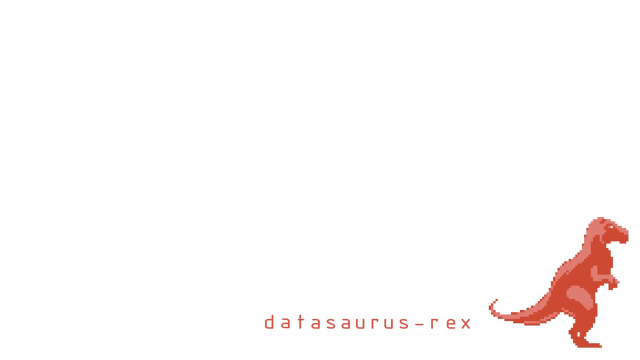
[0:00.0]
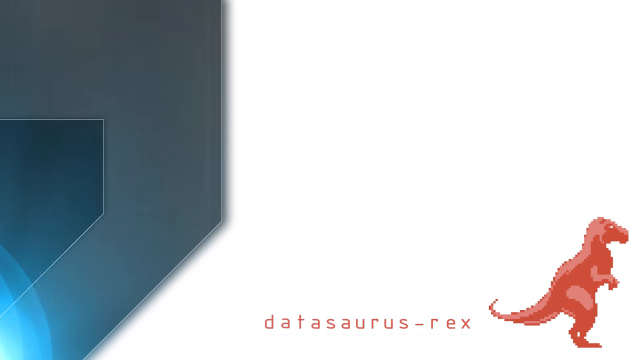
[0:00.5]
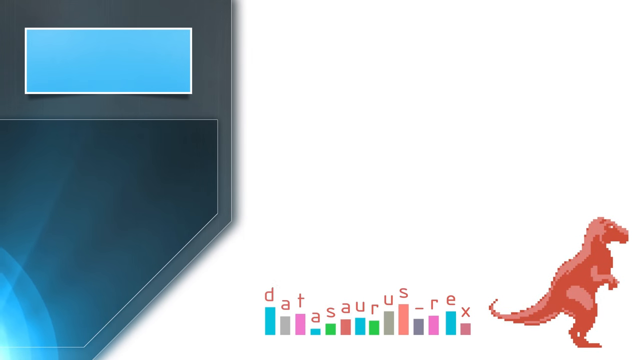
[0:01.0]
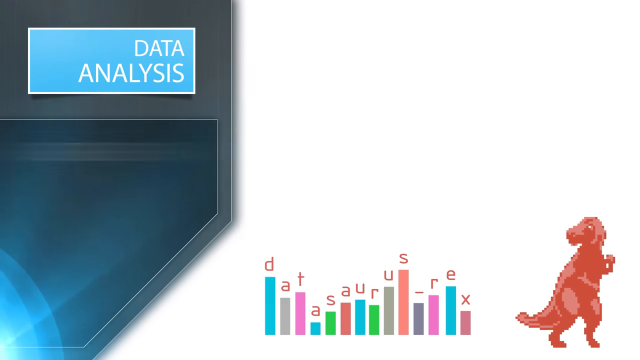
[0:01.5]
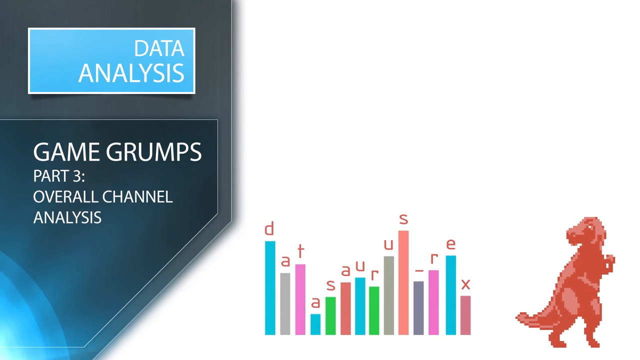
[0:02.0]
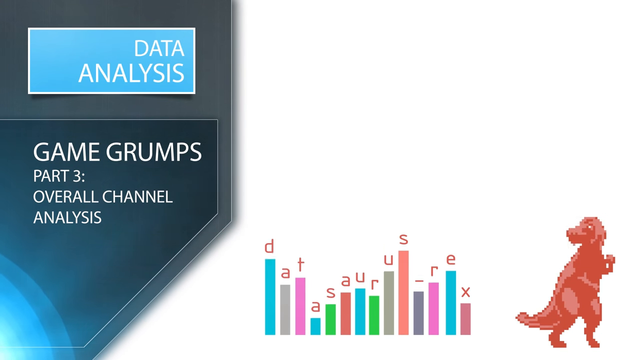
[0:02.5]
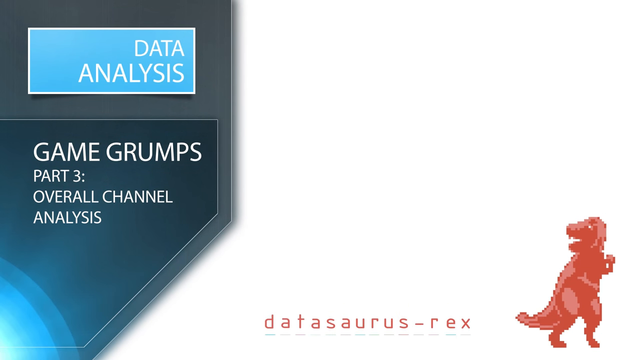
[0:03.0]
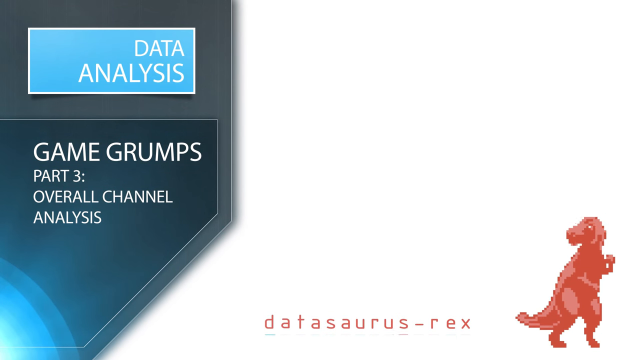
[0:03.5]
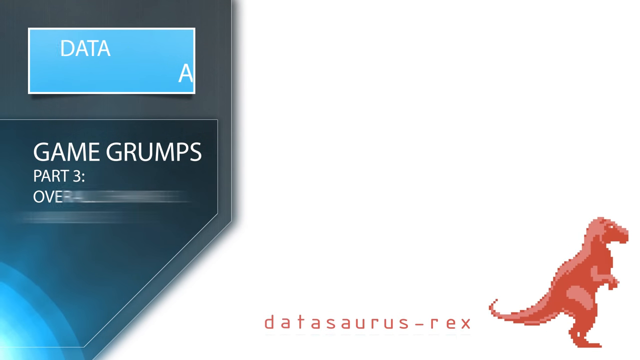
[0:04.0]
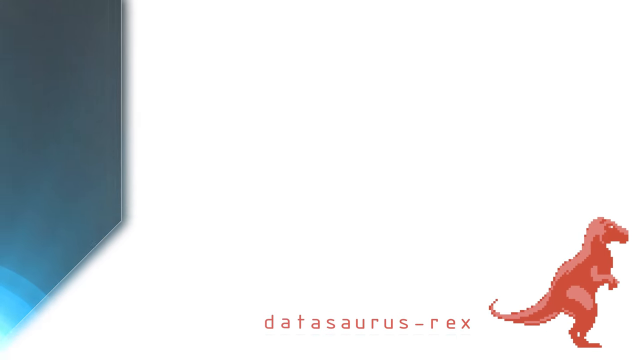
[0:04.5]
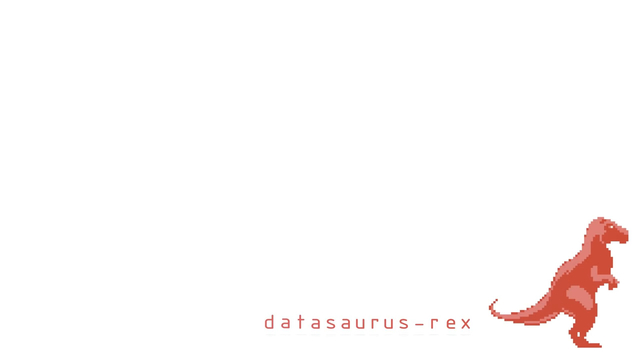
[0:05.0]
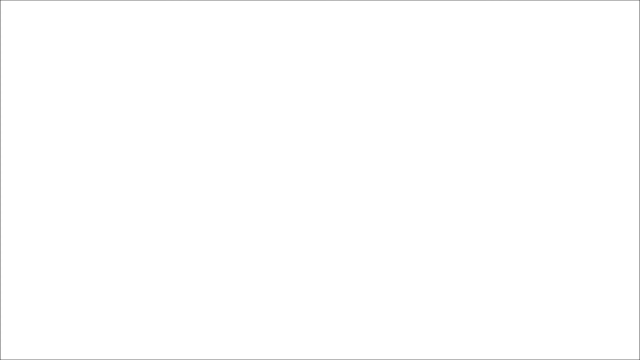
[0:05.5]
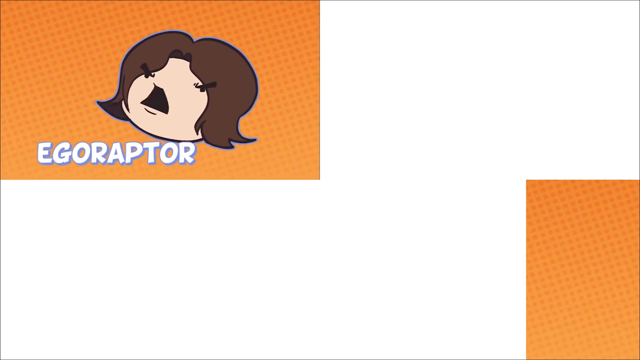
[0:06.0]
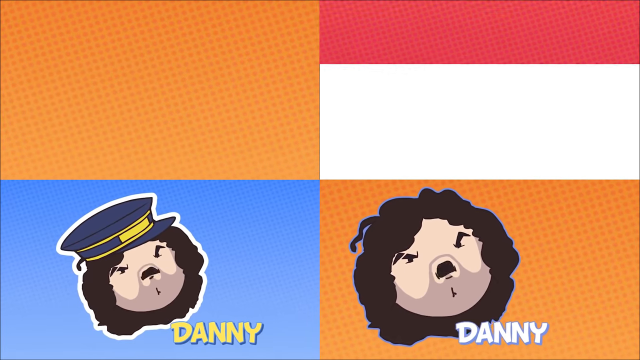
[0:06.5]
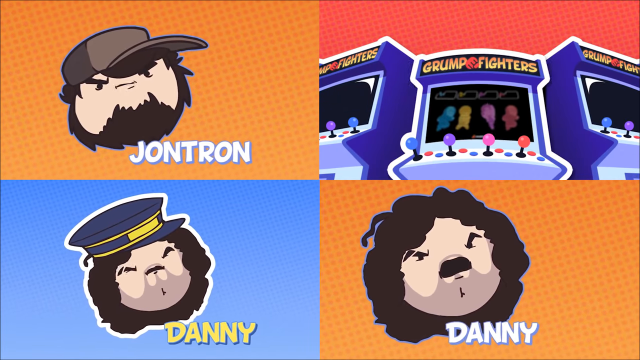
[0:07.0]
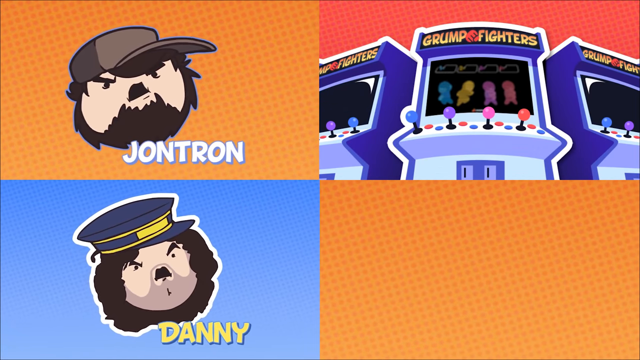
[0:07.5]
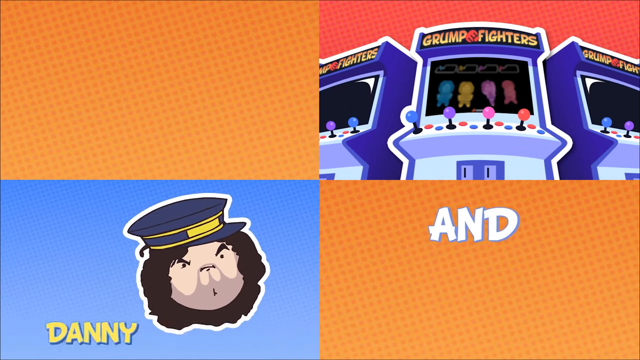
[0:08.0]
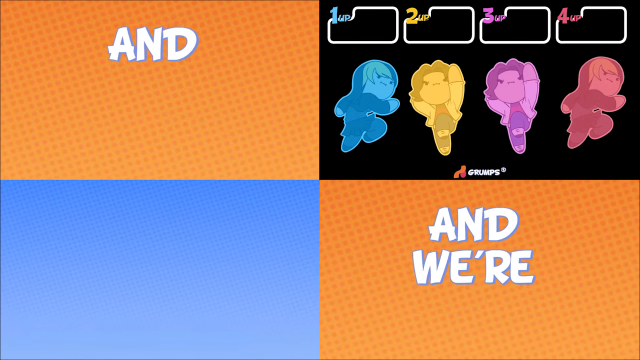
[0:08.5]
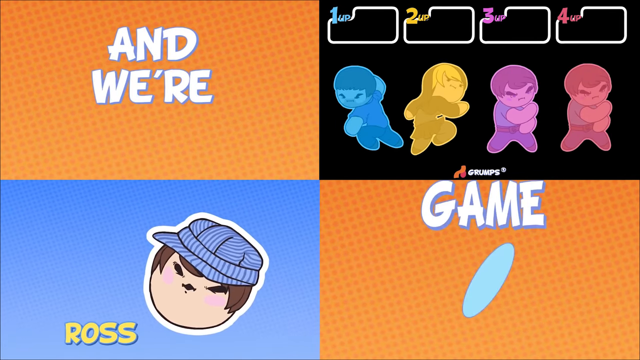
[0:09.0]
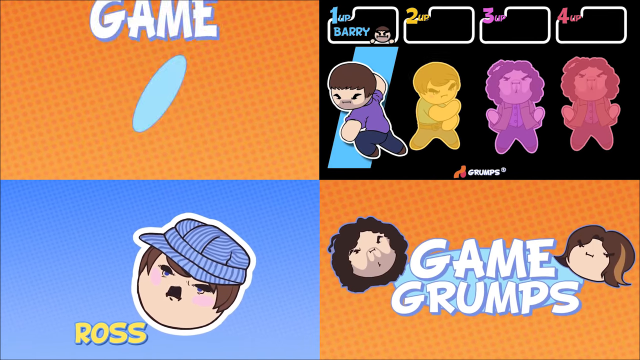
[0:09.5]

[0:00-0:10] The video opens on what appears to be a YouTube video of Game Grumps Part 3 overall channel analysts. A wavy blue rectangular text box on the far top left reads "Data Analyst." A T-Rex in red is on the far right, and the center shows "Datasaurus Rex" with bars colored pink, purple, green, and brown. The video cuts to Danny and Jontron, animated with cartoon character heads, along with arcade-like games labeled "Grump Fighters" that show four individuals with four Joy-Cons, and white text reads "and we're the Game Grumps."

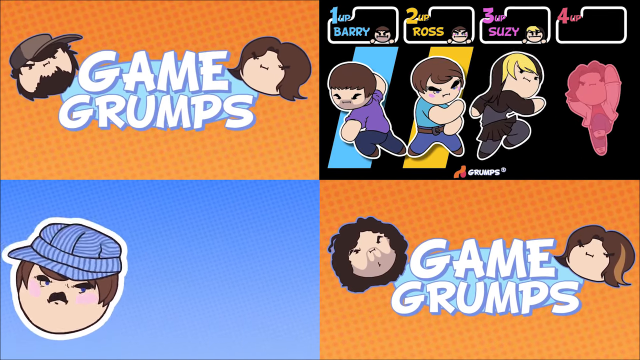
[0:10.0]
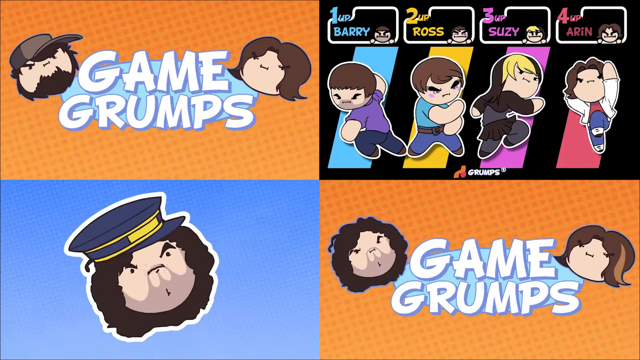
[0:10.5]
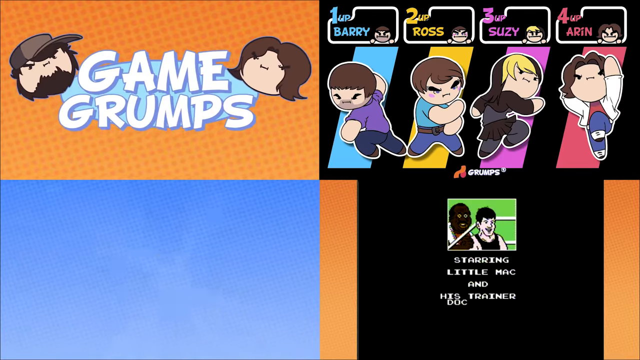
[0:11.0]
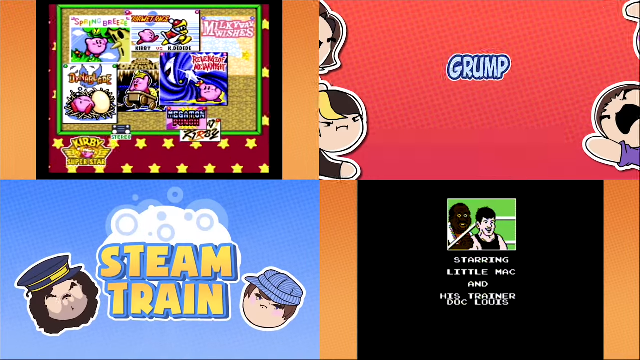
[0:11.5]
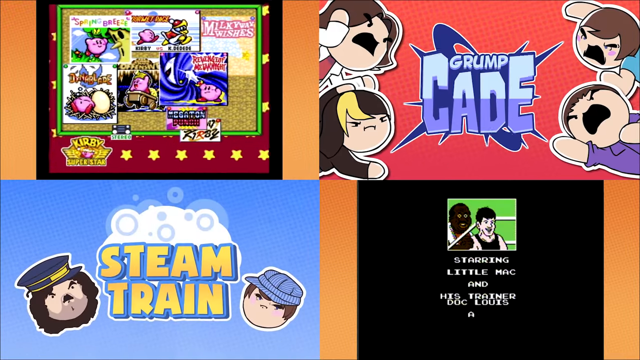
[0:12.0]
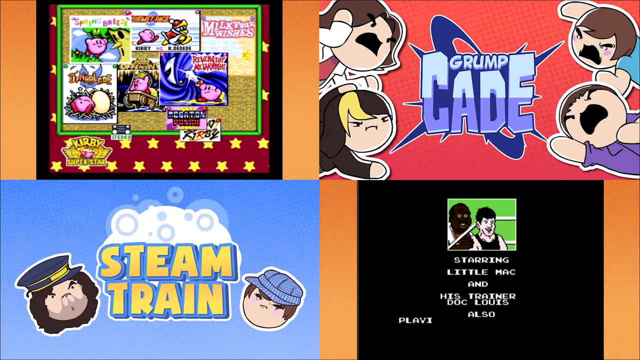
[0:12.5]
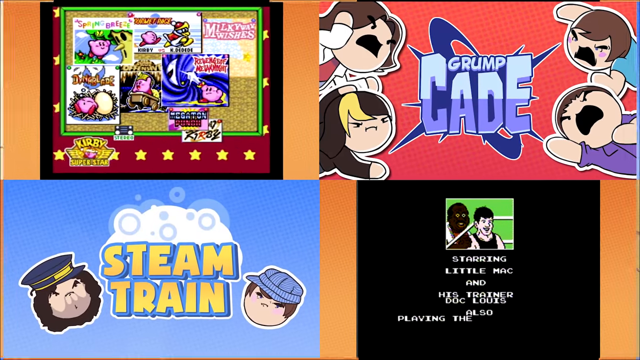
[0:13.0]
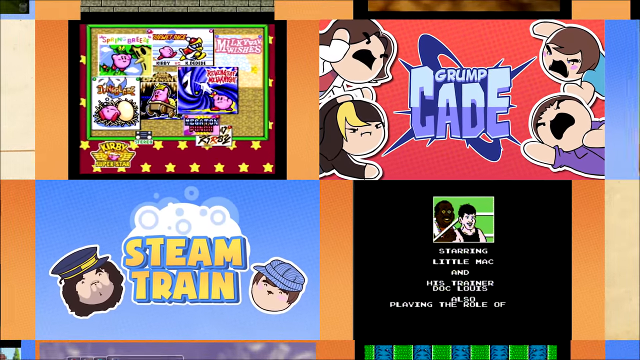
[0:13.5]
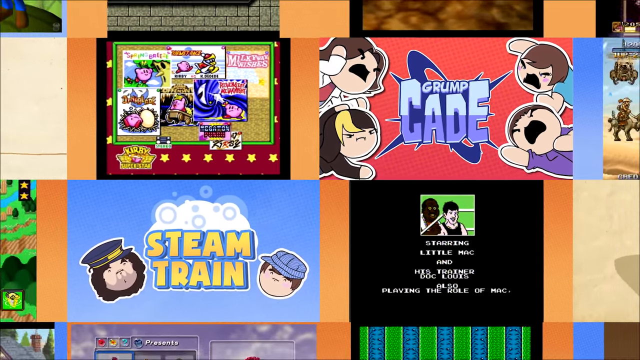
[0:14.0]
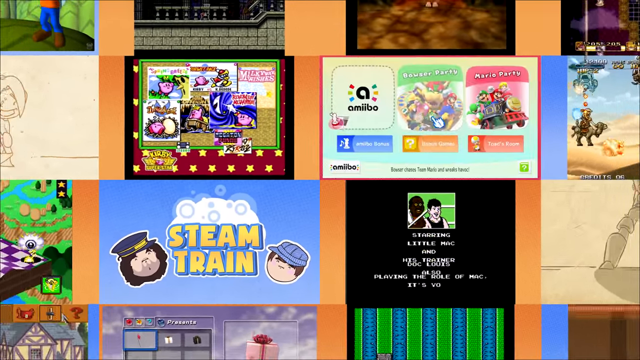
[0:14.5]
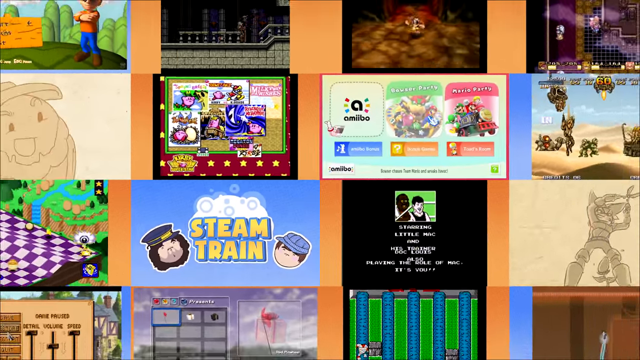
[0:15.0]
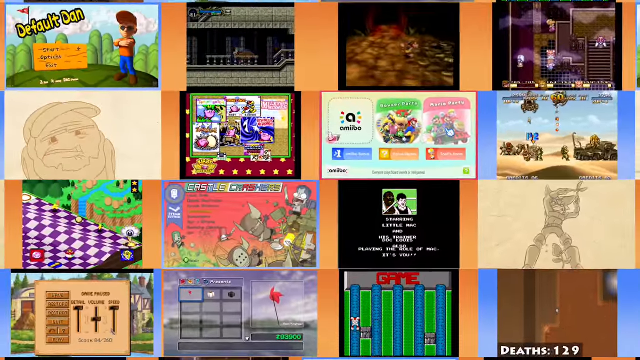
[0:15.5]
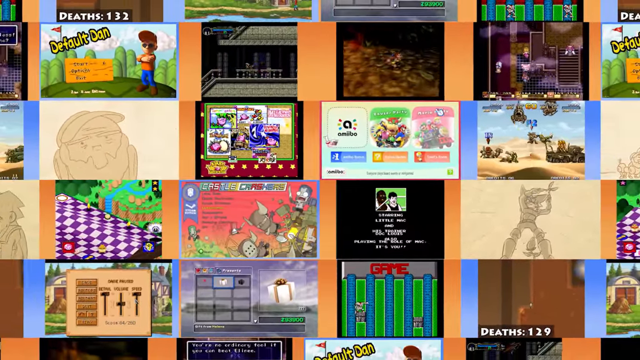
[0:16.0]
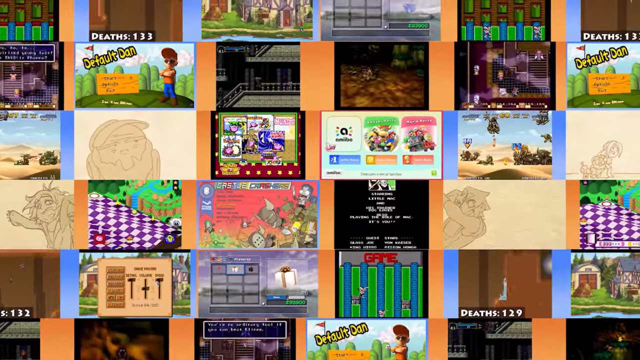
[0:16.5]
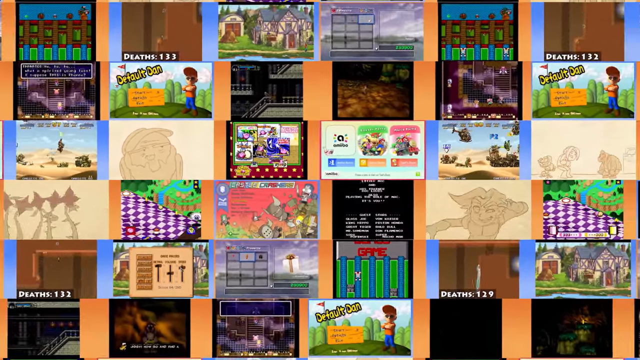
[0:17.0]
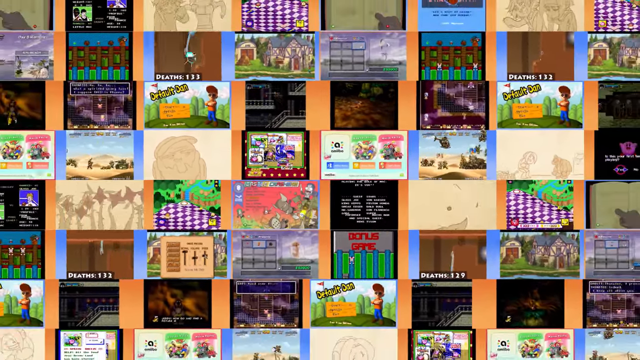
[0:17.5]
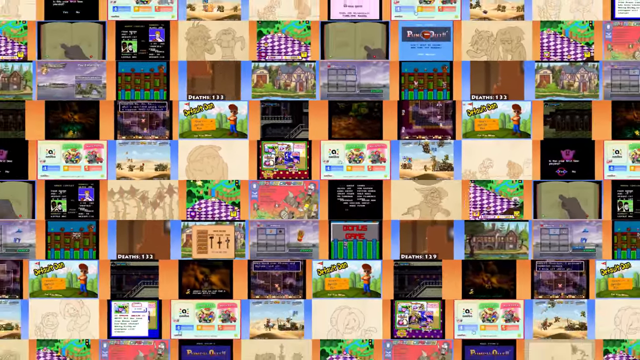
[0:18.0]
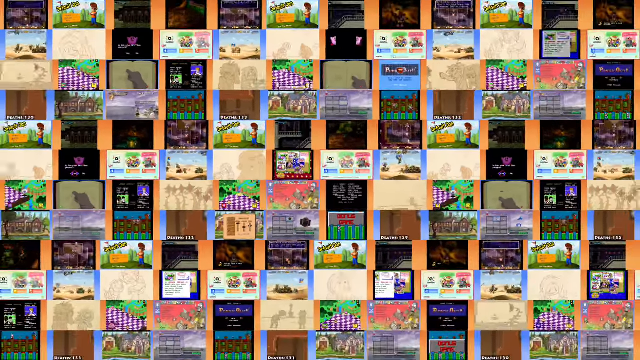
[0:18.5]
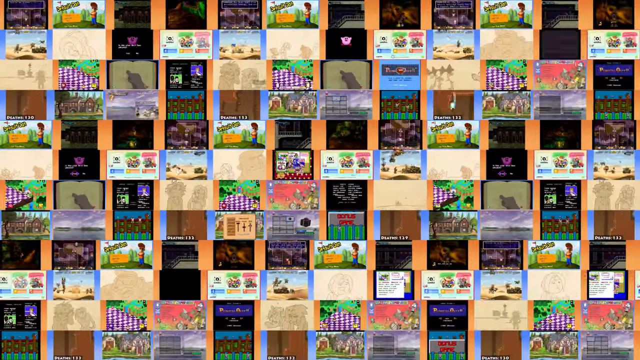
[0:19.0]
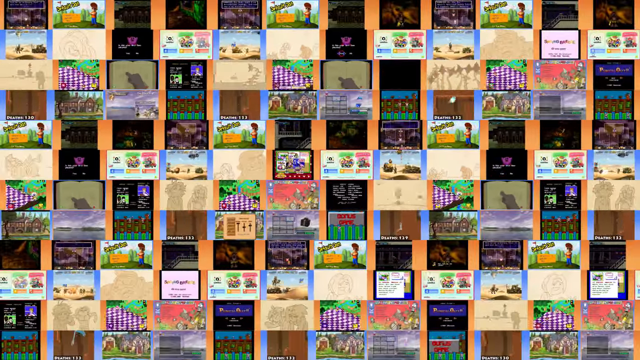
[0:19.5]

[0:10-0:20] Four players are shown: the first is Barry, the second is Susie, and the fourth is Aaron. On the far right is what appears to be a video game with text beginning "sorry little Mac." A Kirby game is on the far top left, with retro screenshots of several stages of Kirby. The view then zooms out to several games being played, with small circles and squares.